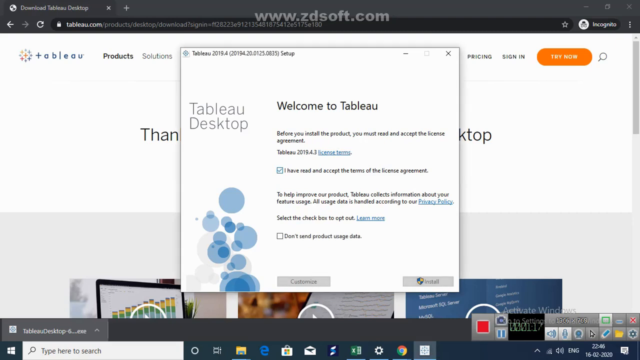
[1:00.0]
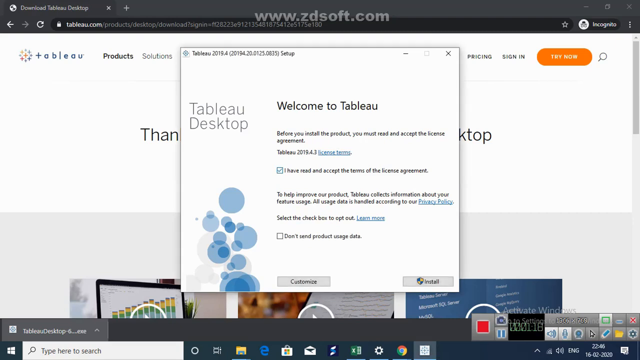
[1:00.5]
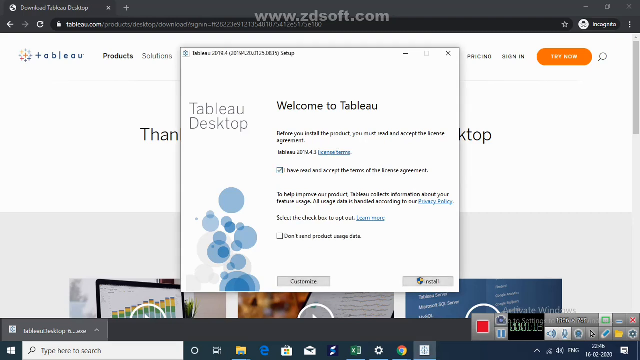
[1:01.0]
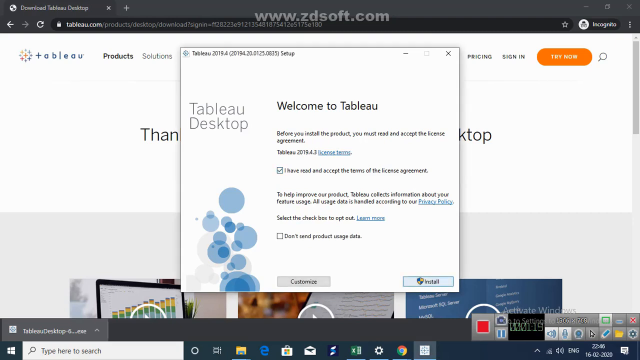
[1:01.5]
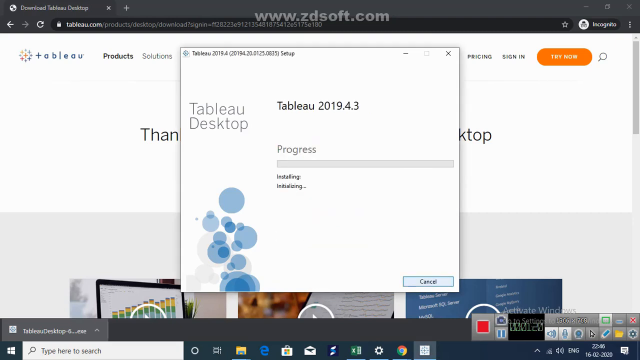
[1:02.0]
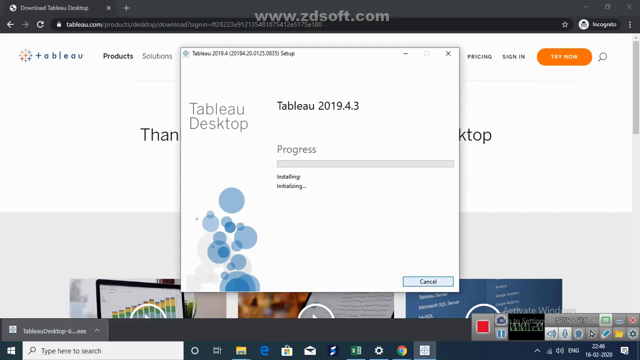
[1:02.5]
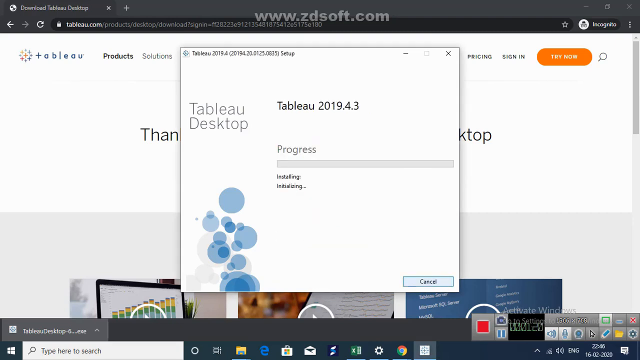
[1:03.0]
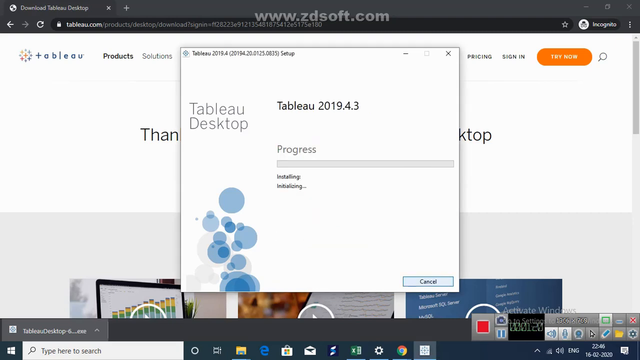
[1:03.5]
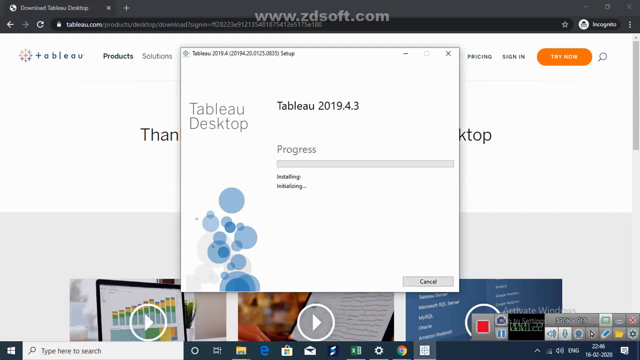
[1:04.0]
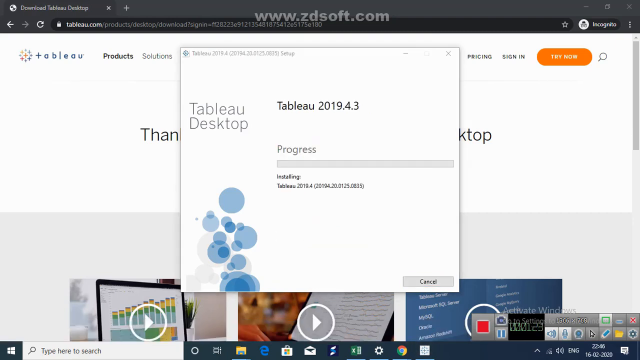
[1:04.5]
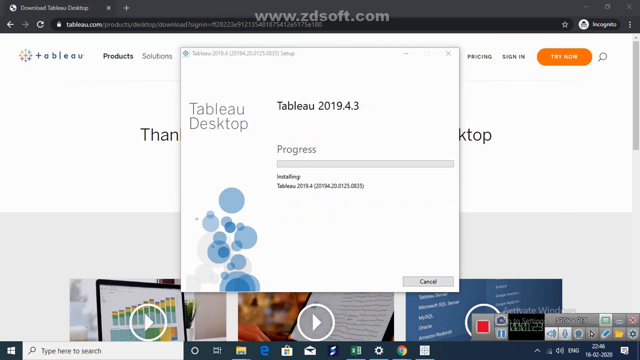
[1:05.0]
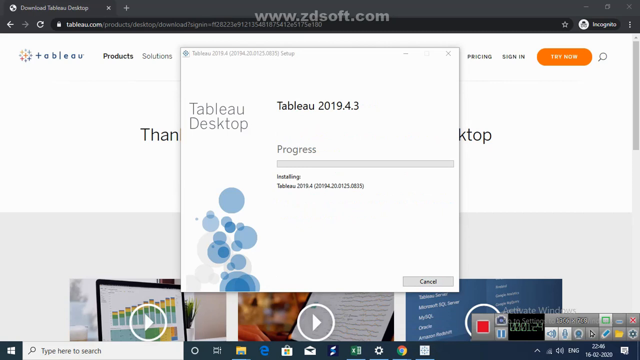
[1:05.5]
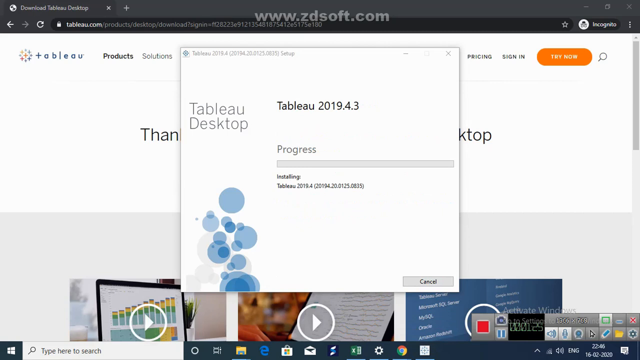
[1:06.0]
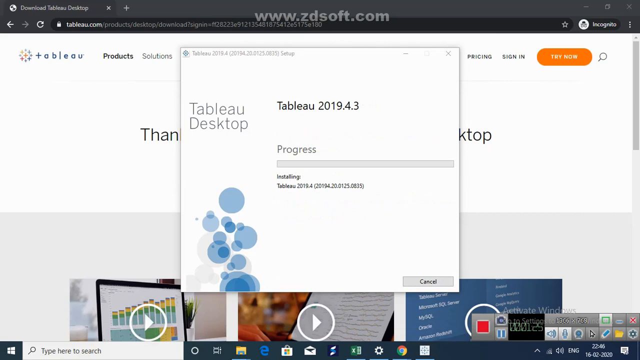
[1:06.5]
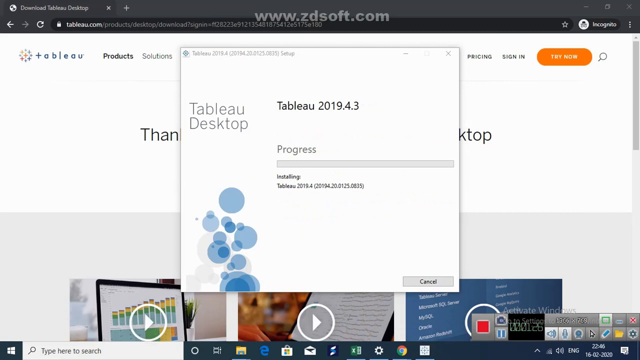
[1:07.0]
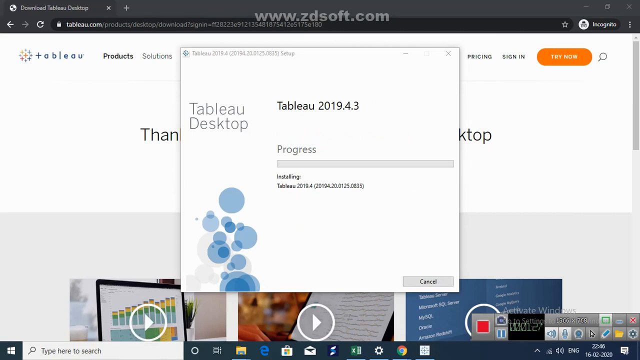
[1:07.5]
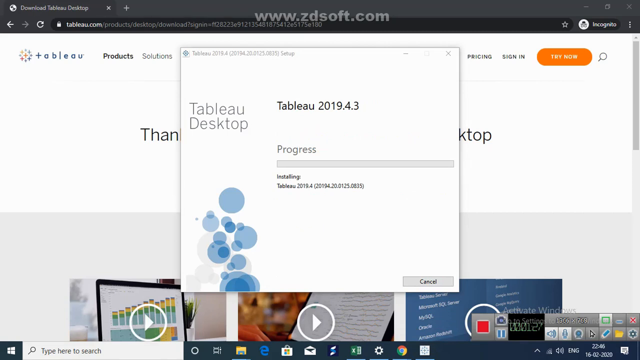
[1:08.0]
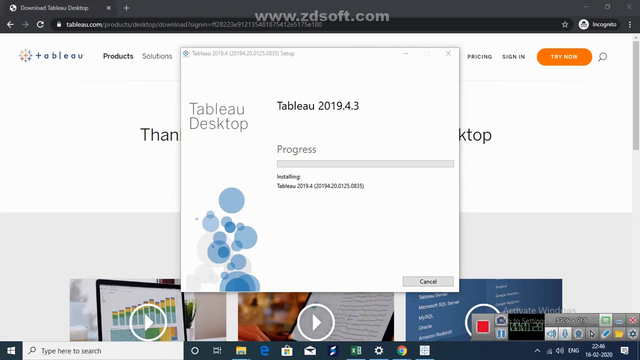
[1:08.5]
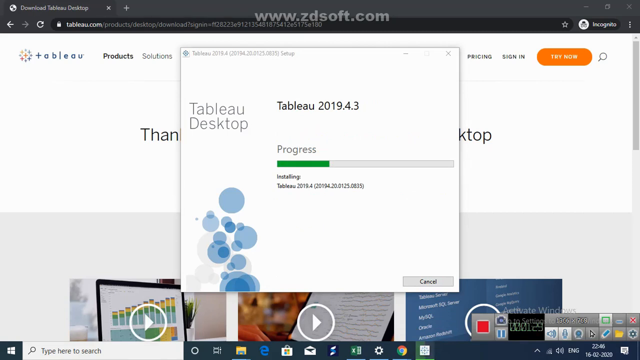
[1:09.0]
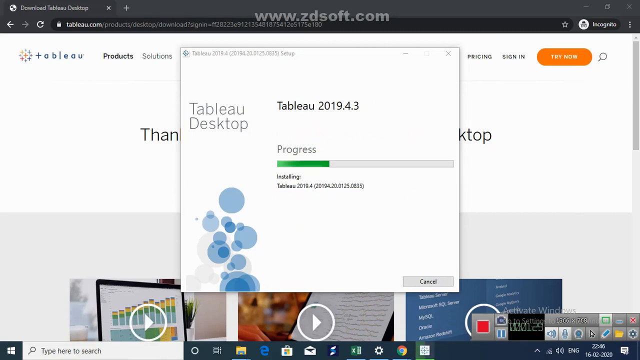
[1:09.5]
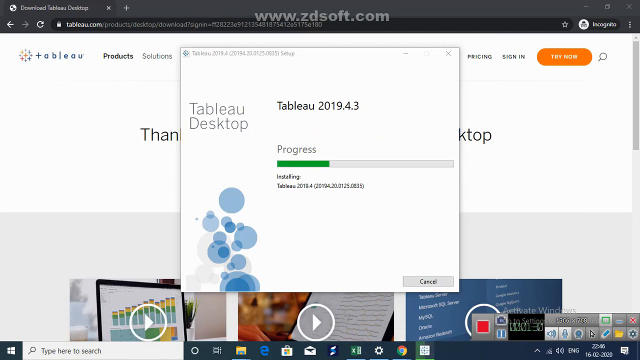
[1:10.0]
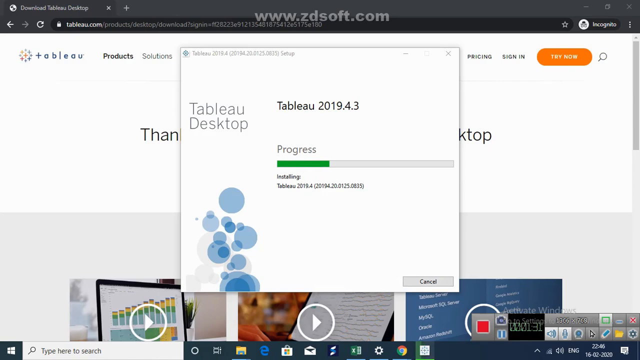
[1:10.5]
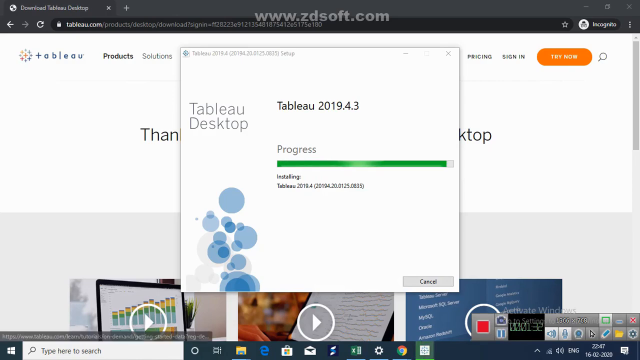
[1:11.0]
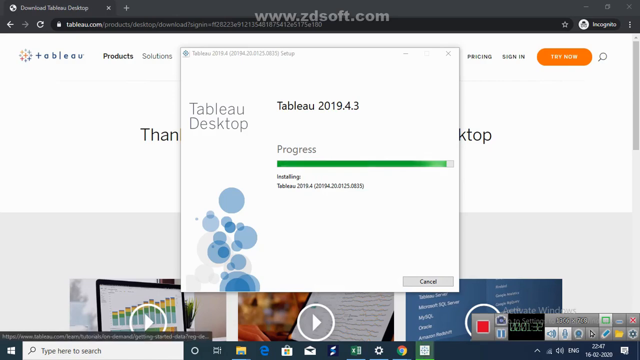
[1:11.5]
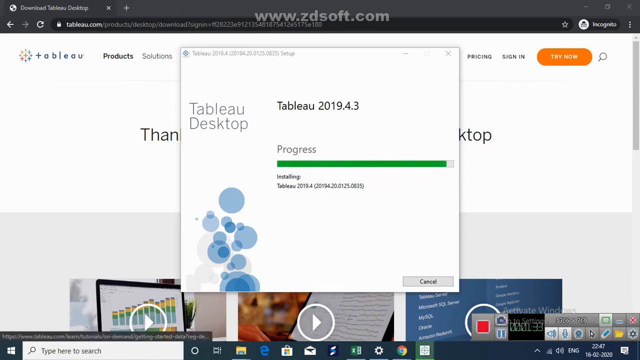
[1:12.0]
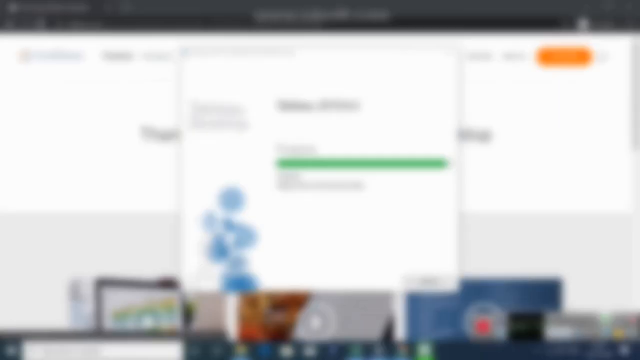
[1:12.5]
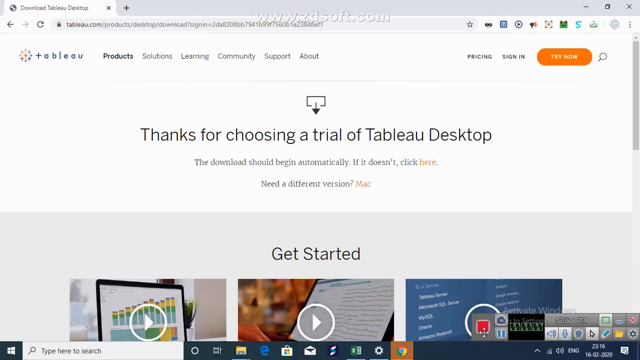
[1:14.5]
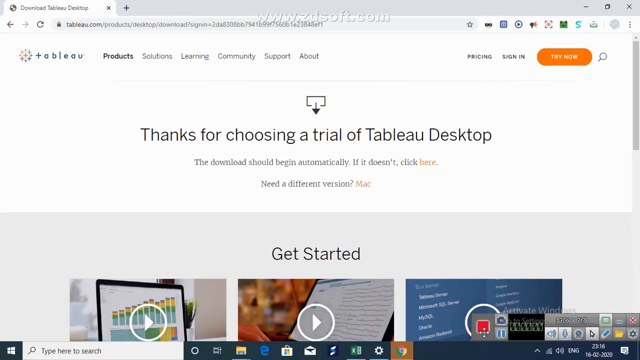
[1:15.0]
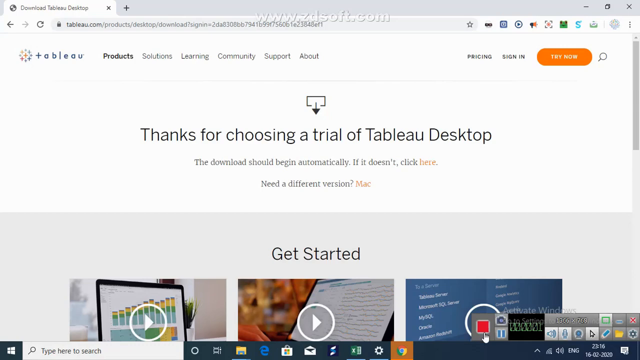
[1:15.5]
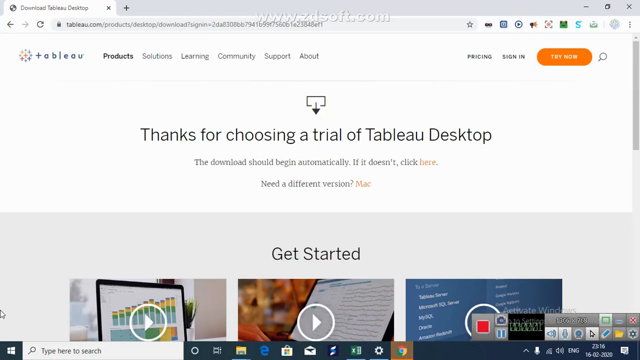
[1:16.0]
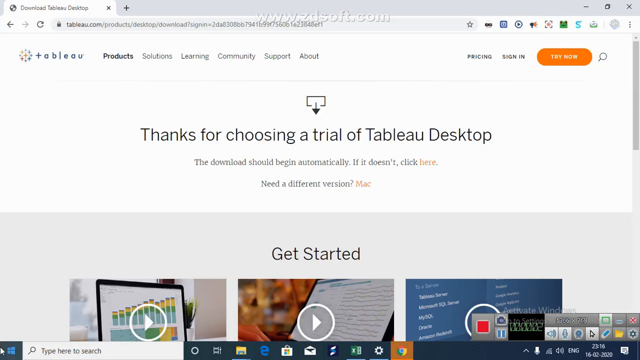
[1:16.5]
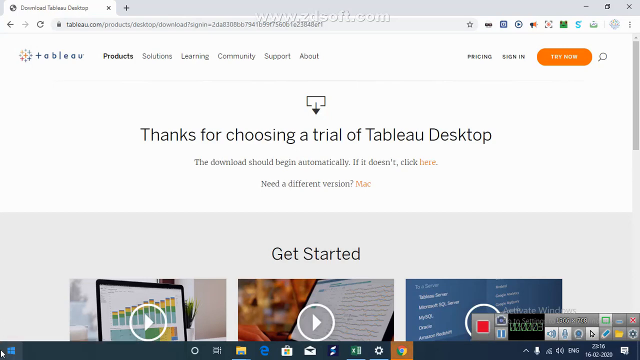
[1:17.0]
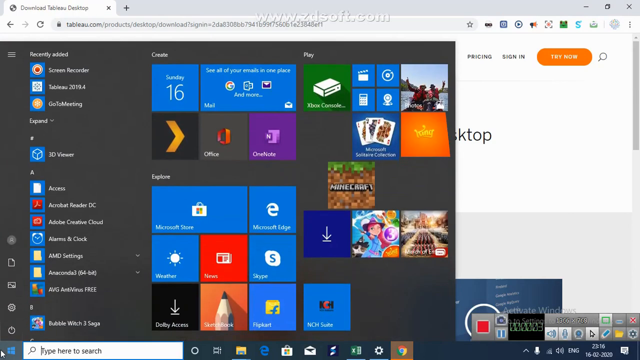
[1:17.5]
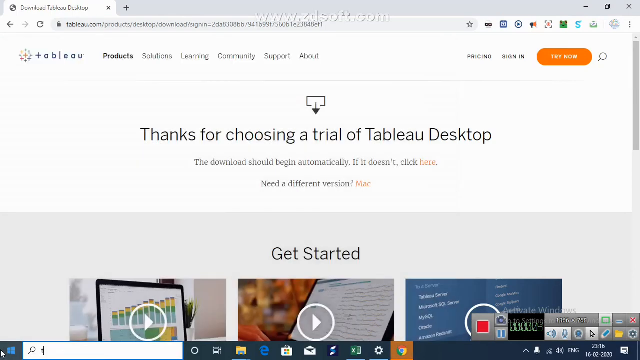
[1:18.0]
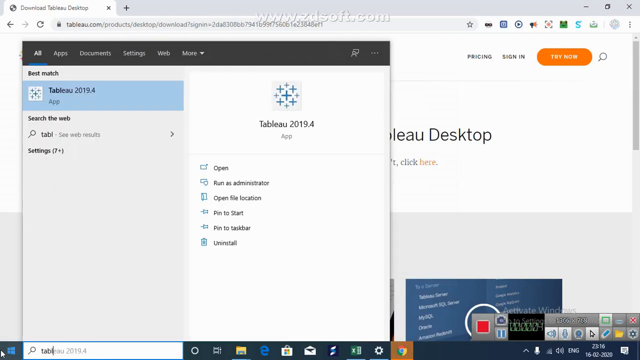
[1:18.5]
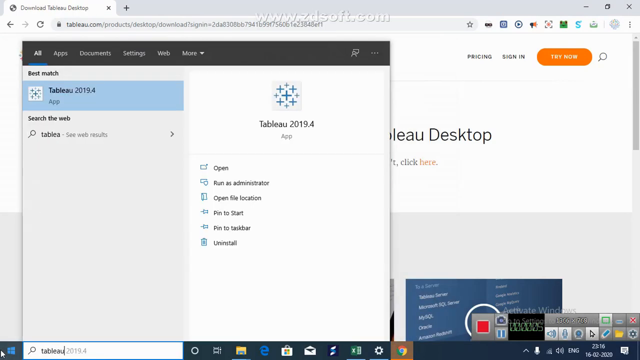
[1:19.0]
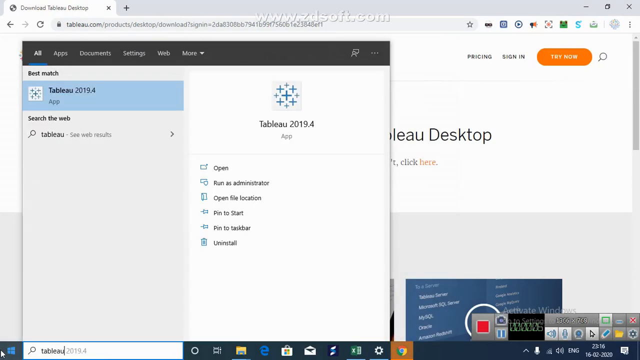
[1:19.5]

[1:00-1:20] In the center of the webpage a square tab is open that says "welcome to TABLEAU". Below it is black writing too blurry to read, and there is a box checked in blue. To the left of the welcome text, "TABLEAU desktop" appears in gray letters. Something is clicked and a progress bar appears labeled "TABLEAU2019.4.3". The progress bar fills up and turns green. The screen turns black, then returns to the home screen. Something pops up, then another window pops up. The view returns to the window that says "thanks for choosing a trial of TABLEAU desktop". Below that it says "the download should begin automatically. If it doesn't, click here." Below that is "need a different version" and "Mac", then "get started", and at the bottom are three videos that can be played.